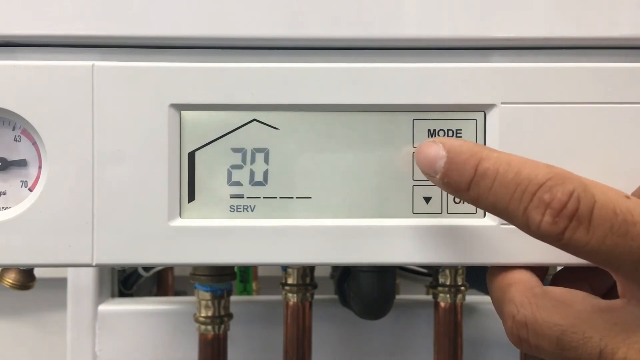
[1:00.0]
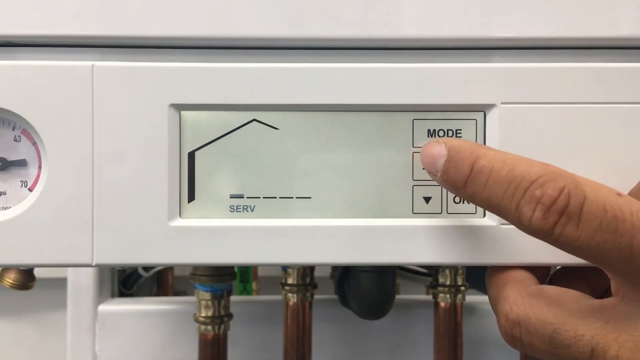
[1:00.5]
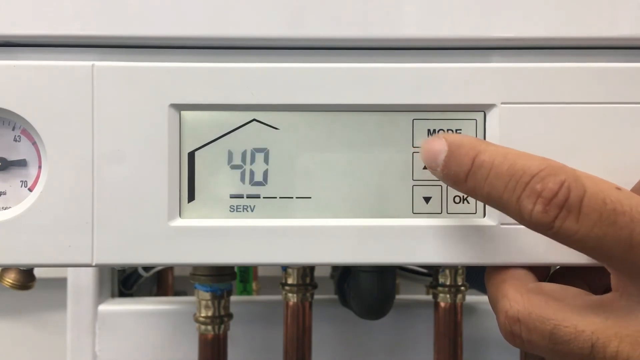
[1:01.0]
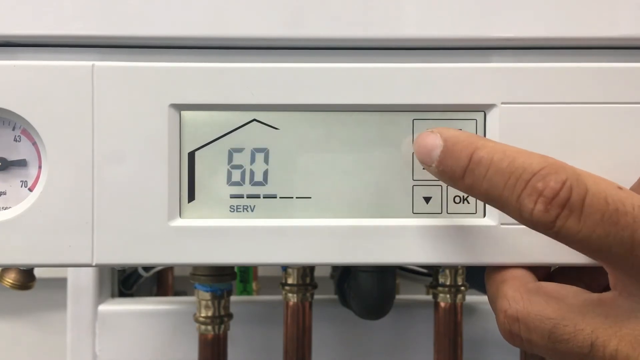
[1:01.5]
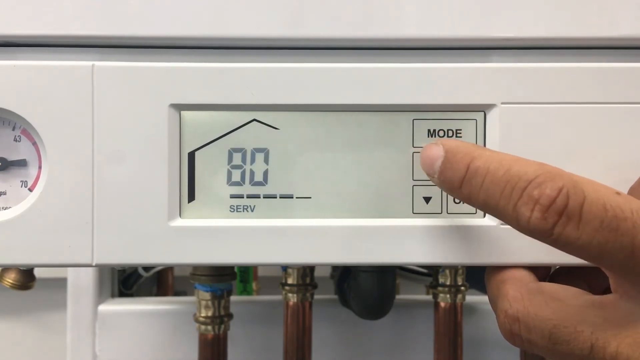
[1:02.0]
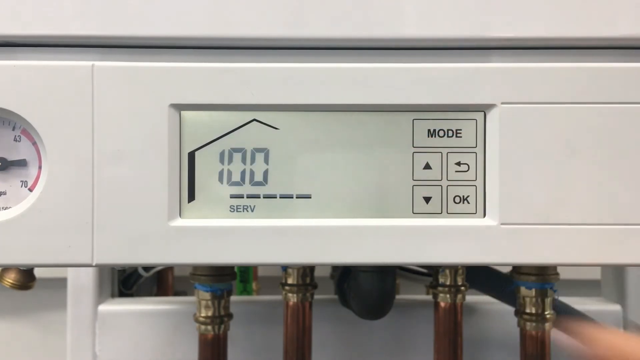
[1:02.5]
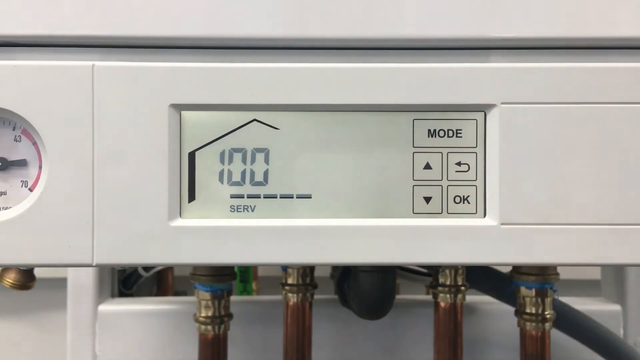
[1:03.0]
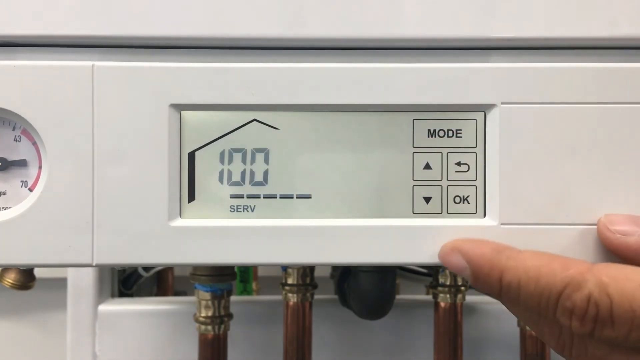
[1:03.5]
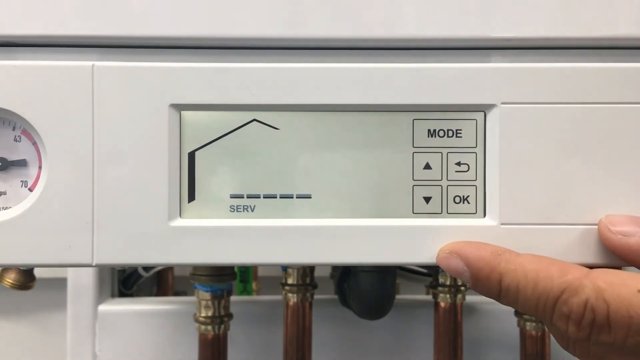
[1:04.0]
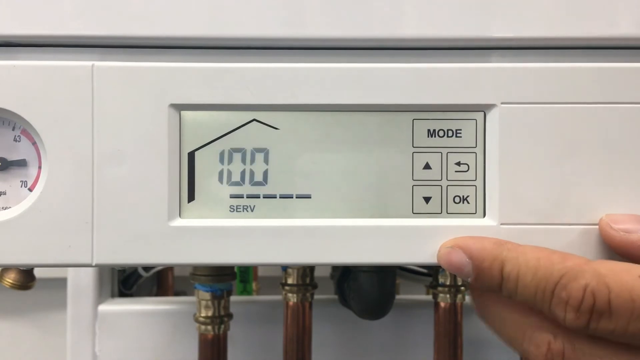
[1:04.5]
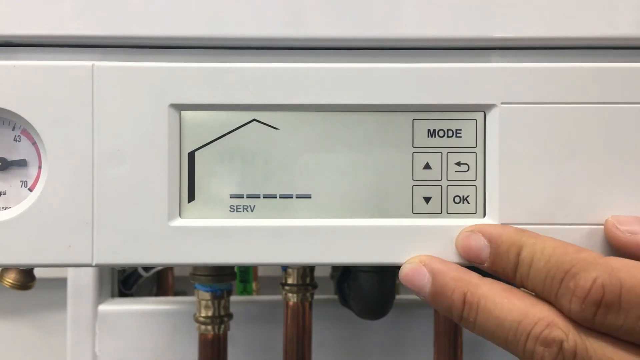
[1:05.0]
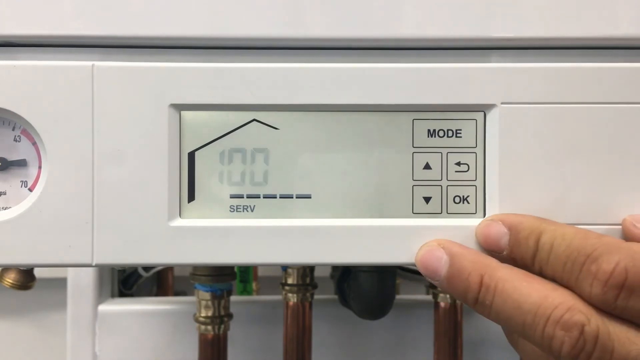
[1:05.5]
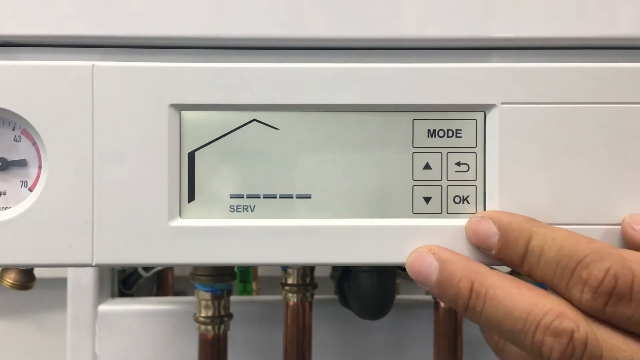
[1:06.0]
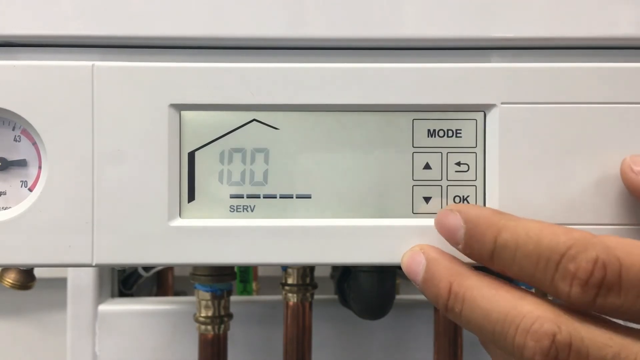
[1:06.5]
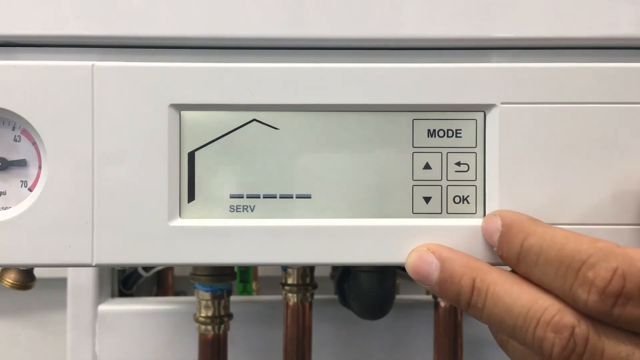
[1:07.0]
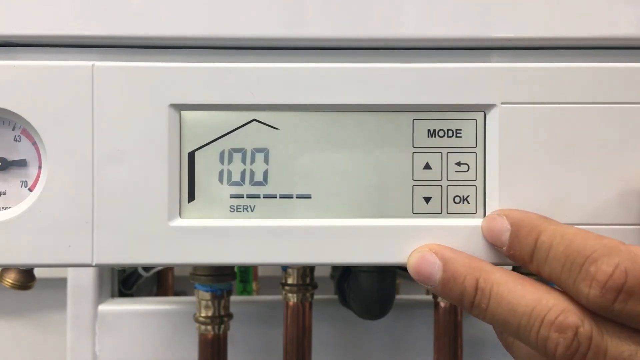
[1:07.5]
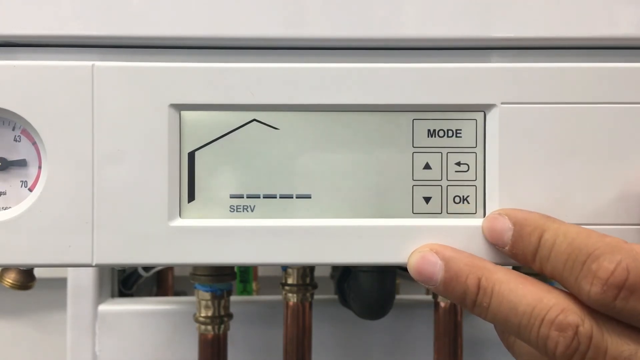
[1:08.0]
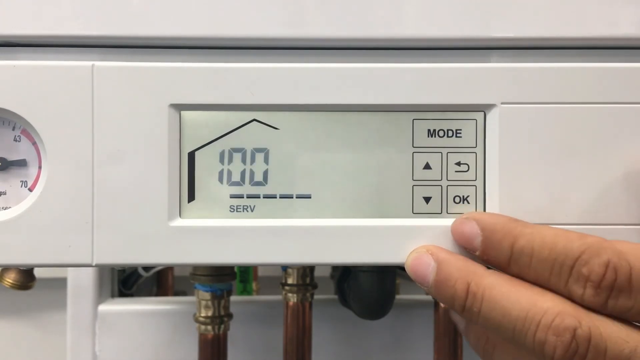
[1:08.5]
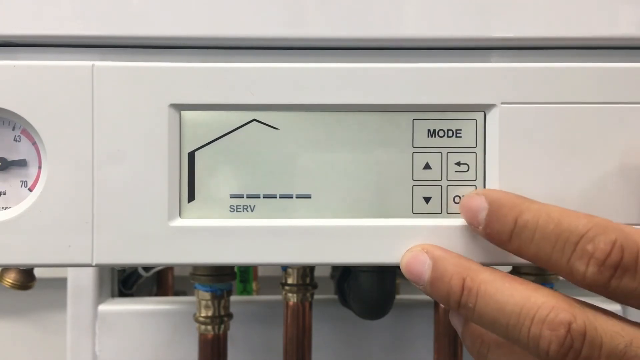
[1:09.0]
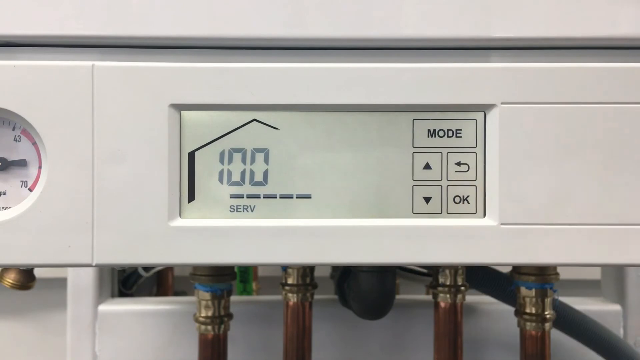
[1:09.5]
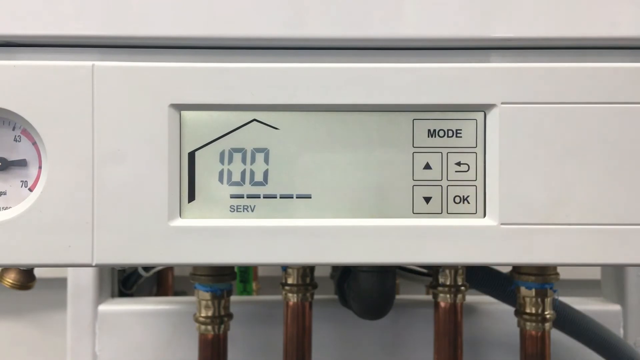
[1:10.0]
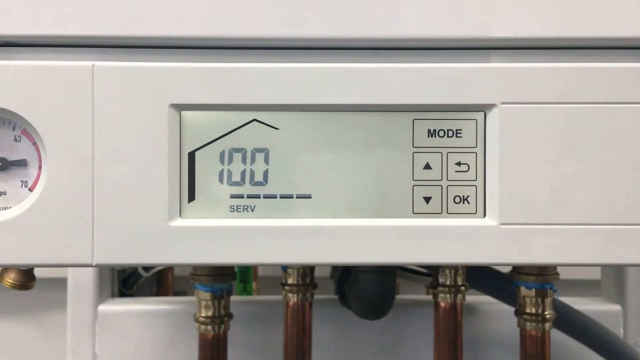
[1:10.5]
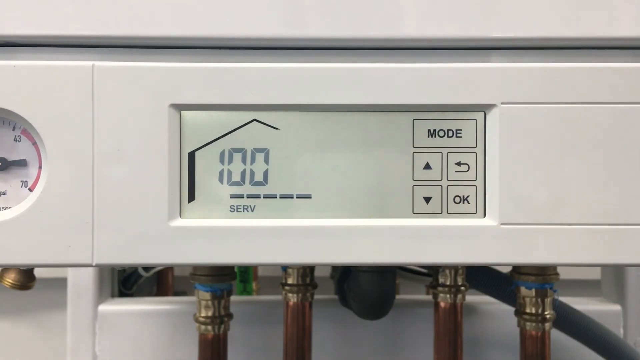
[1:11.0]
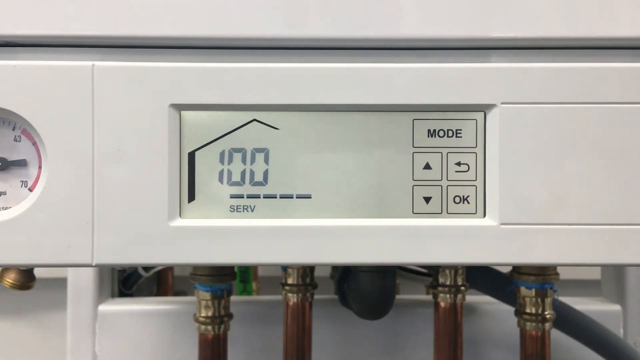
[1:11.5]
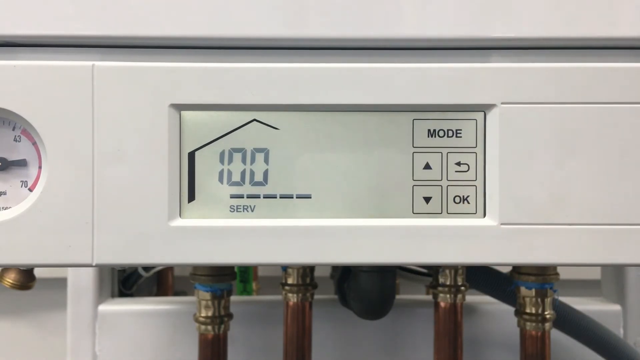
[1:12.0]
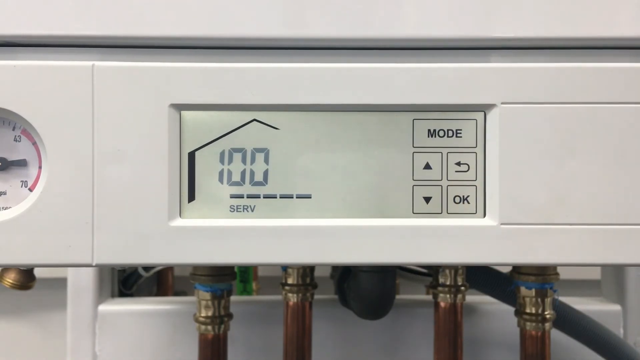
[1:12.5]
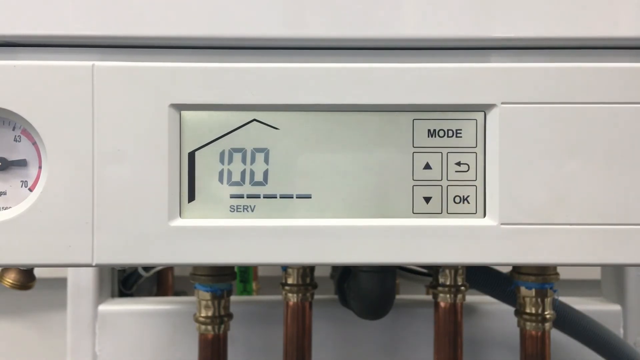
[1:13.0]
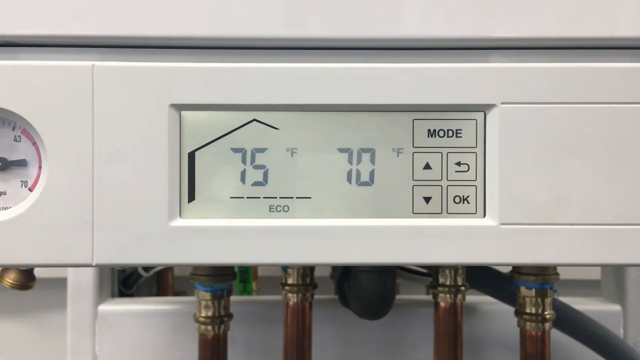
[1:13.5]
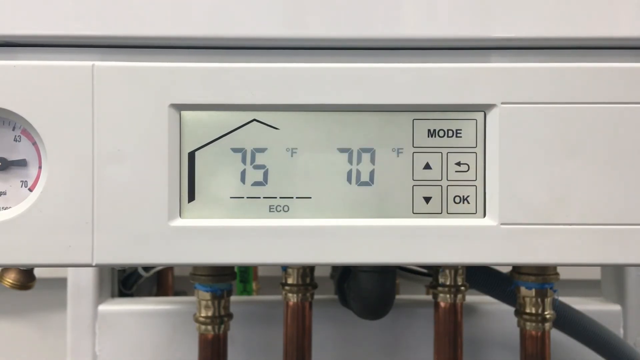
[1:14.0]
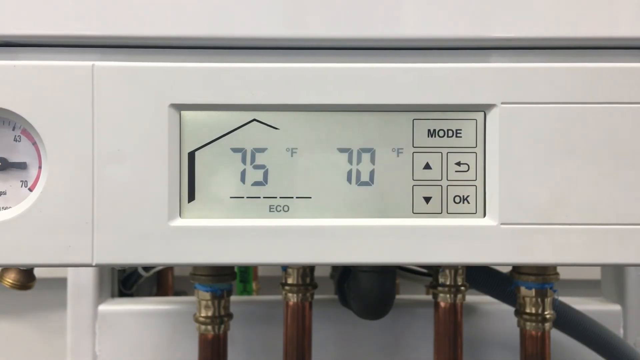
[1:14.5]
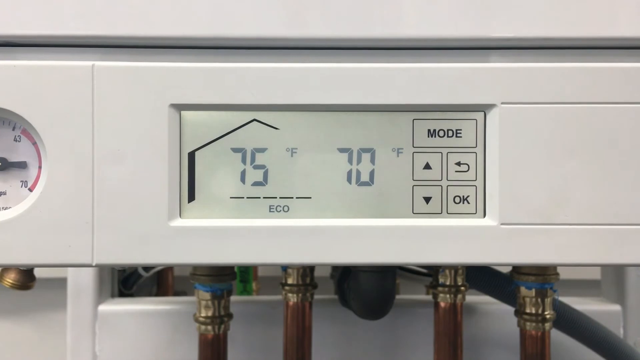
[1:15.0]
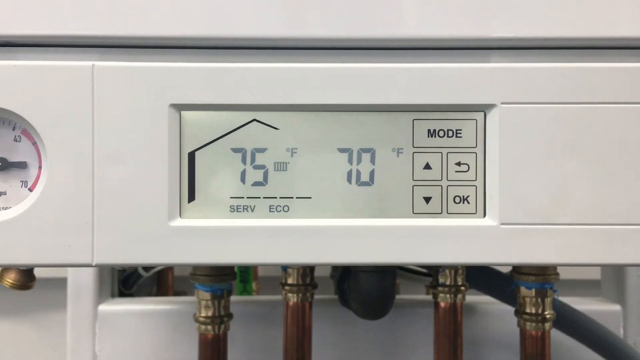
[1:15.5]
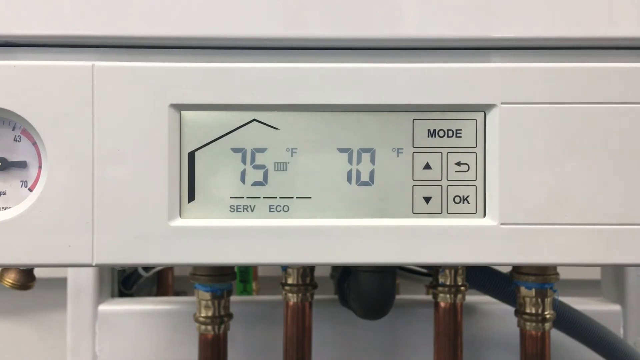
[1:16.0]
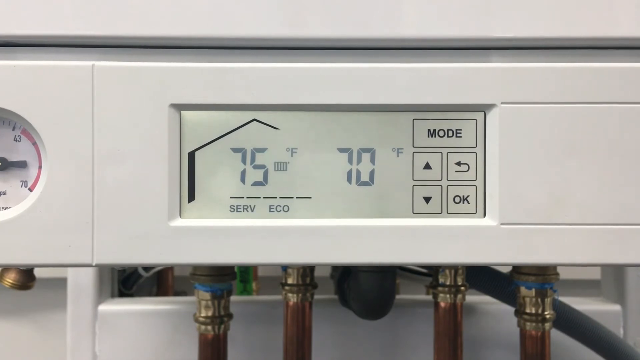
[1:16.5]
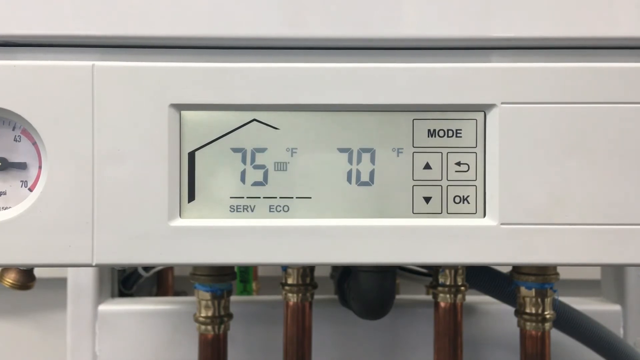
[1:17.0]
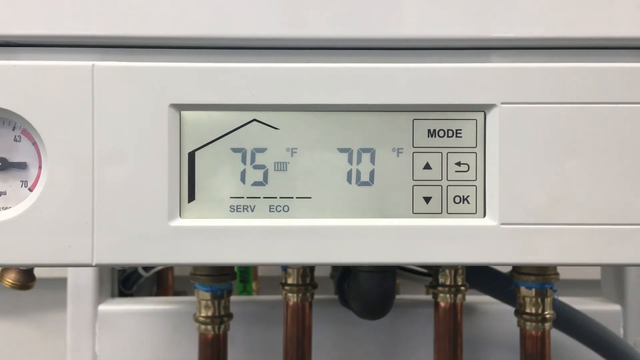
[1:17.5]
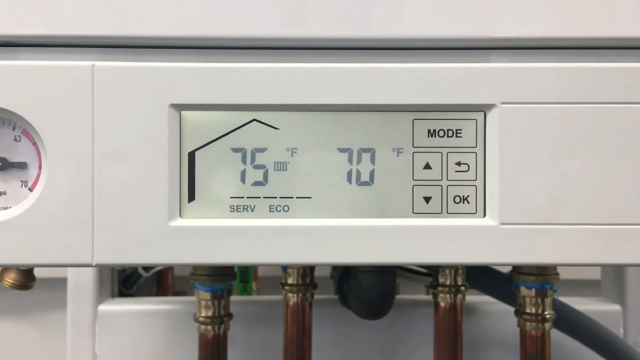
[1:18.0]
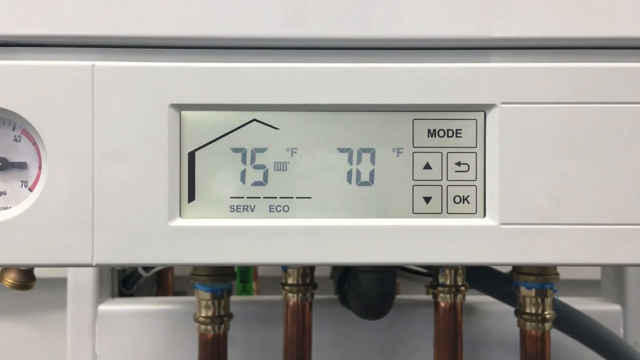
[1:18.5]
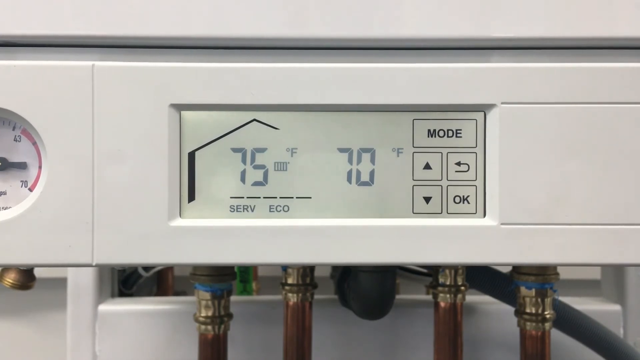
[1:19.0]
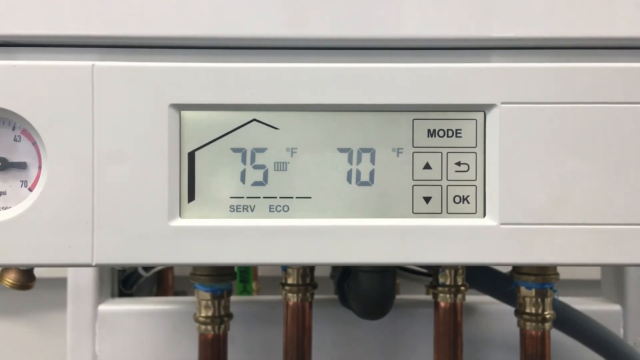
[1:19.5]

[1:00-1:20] The man points at 20 with "self" shown and presses the up arrow, raising it to 100. The 100 blinks until the man presses OK, and then it stops blinking. The display returns to 75 degrees Fahrenheit with "Eco" inside the house and 70 degrees Fahrenheit on the right-hand side of the image. "Eco" appears without the man touching anything.